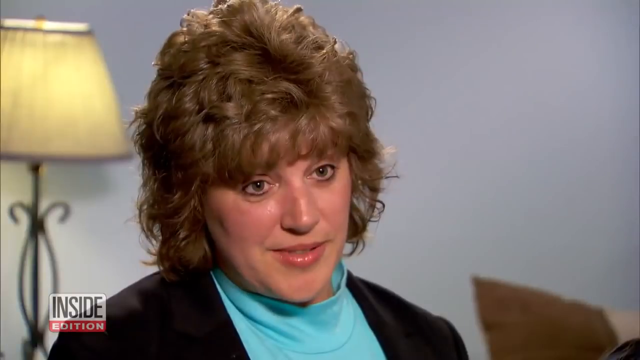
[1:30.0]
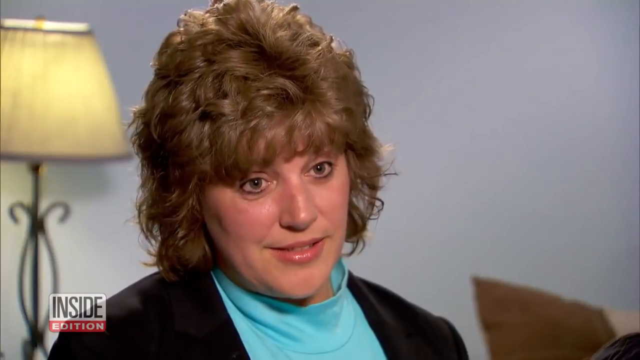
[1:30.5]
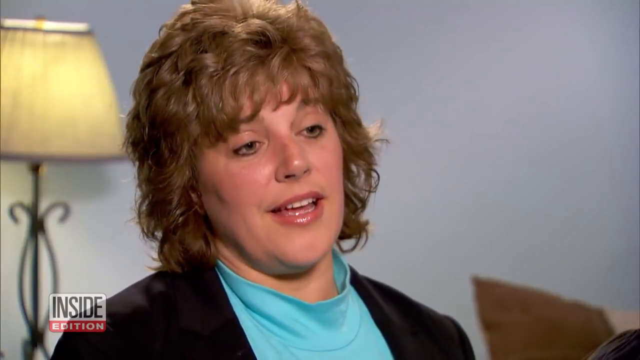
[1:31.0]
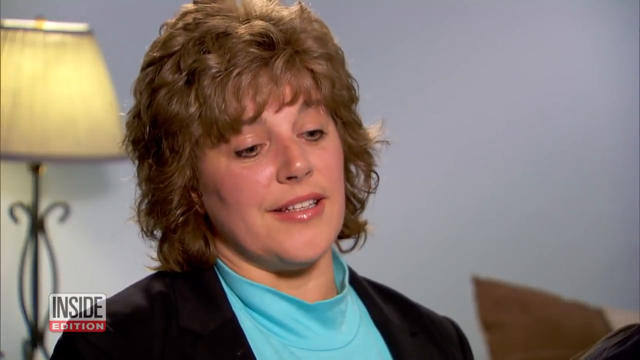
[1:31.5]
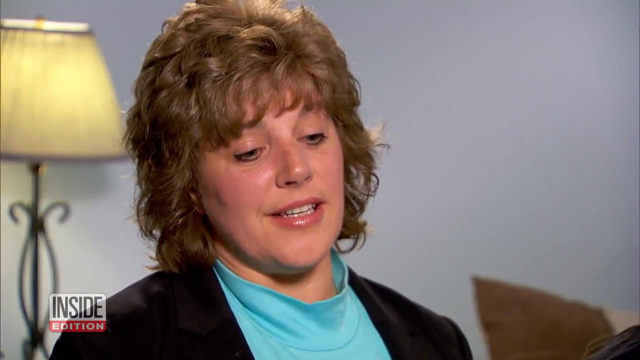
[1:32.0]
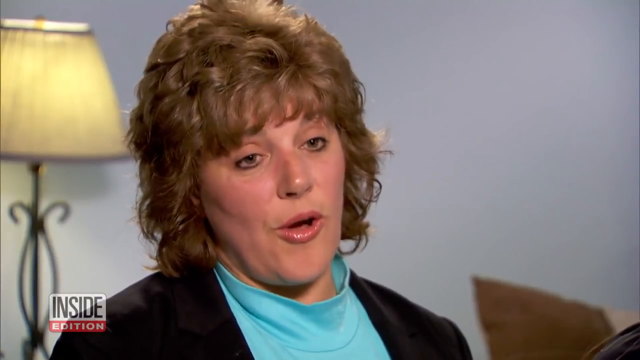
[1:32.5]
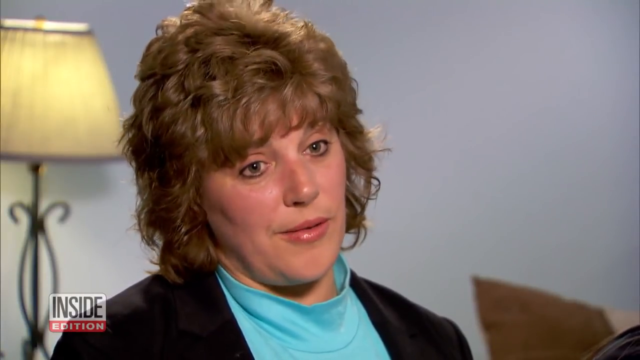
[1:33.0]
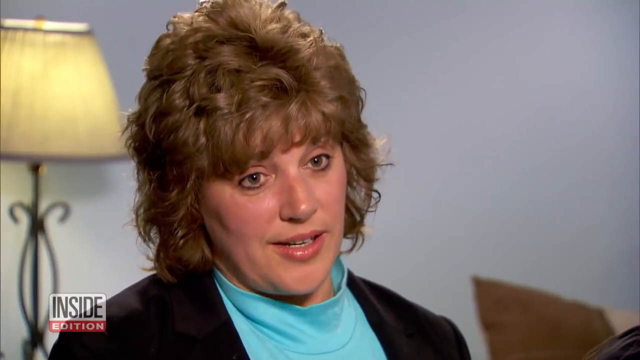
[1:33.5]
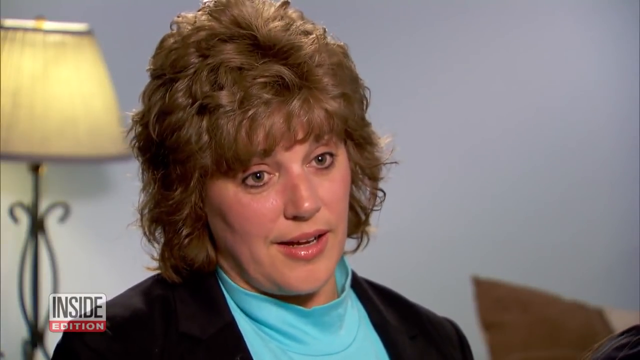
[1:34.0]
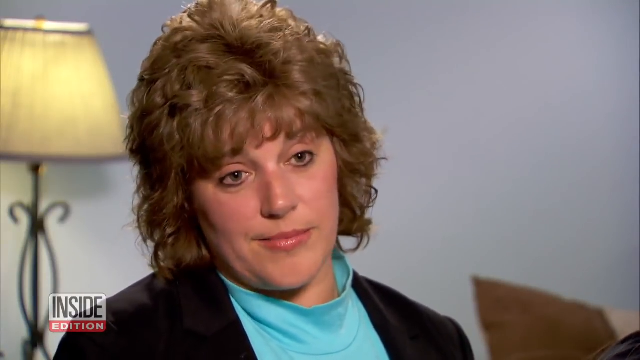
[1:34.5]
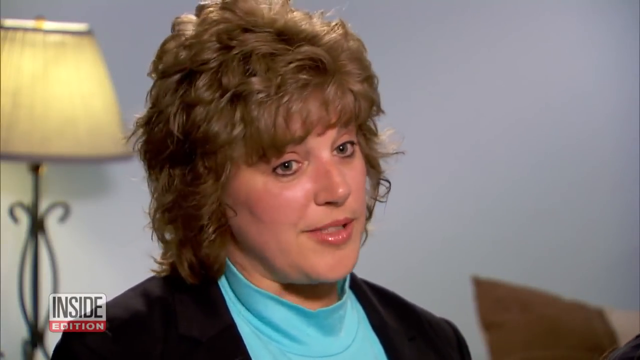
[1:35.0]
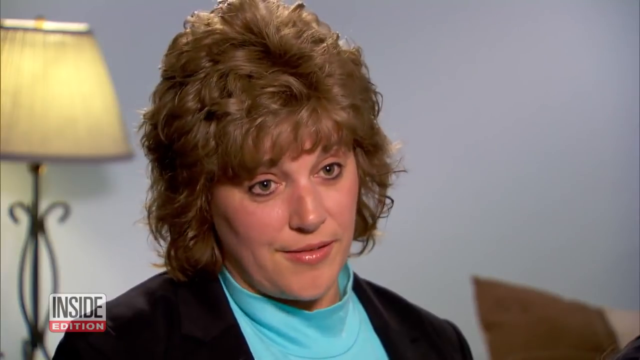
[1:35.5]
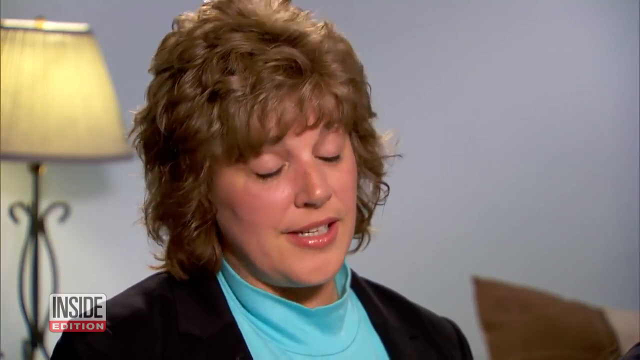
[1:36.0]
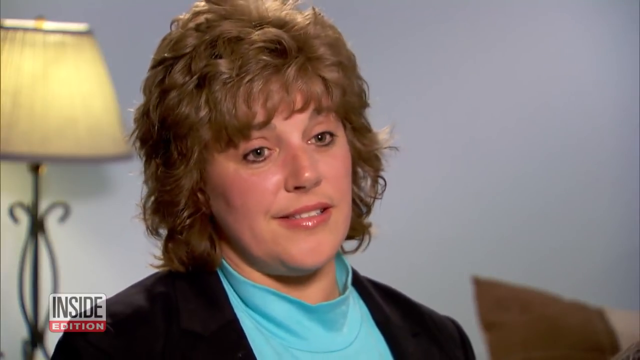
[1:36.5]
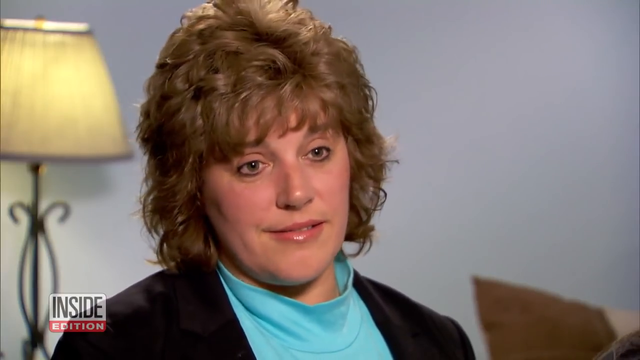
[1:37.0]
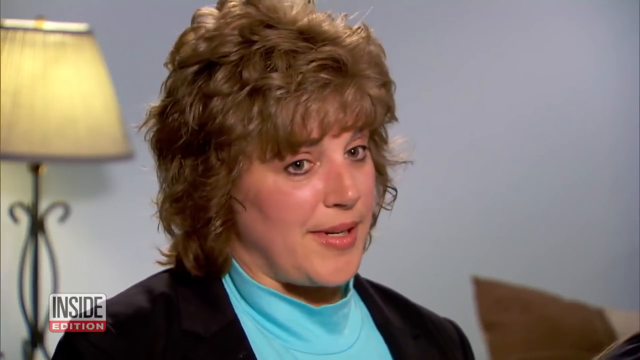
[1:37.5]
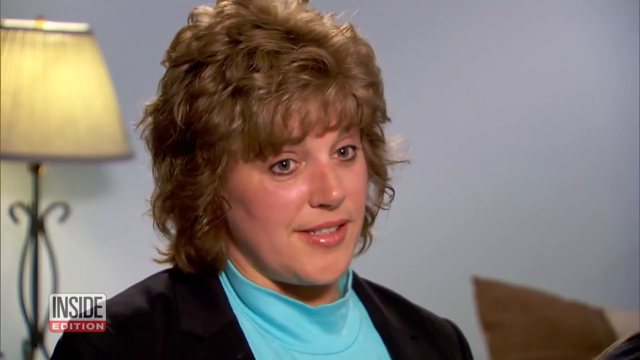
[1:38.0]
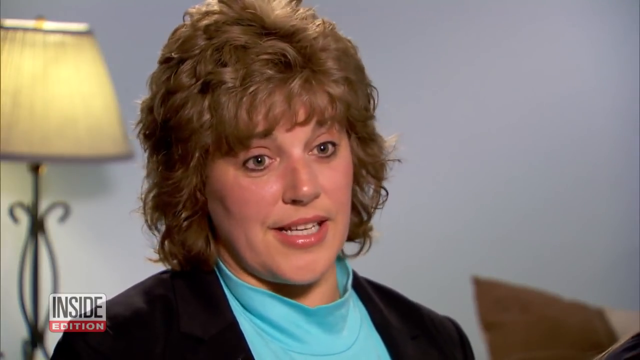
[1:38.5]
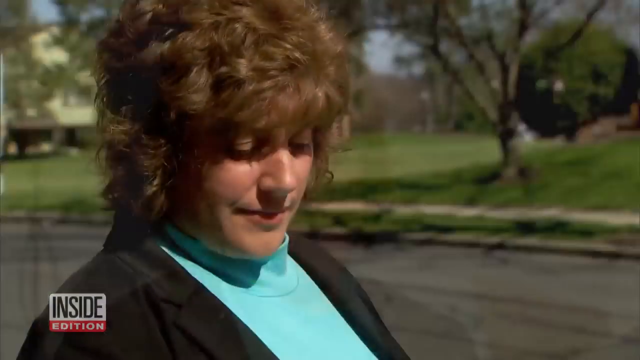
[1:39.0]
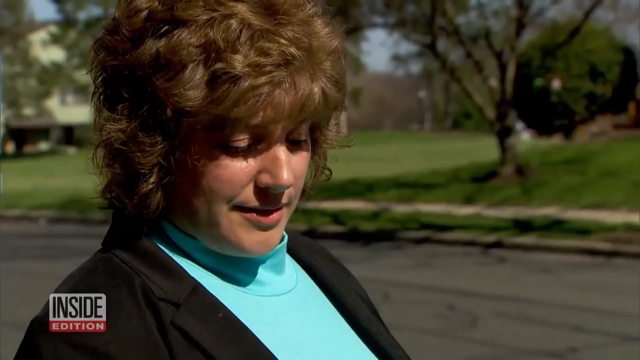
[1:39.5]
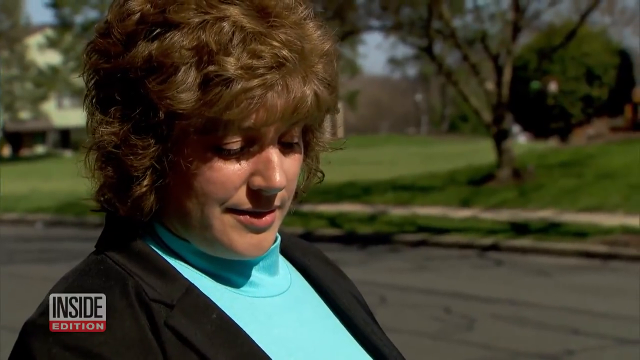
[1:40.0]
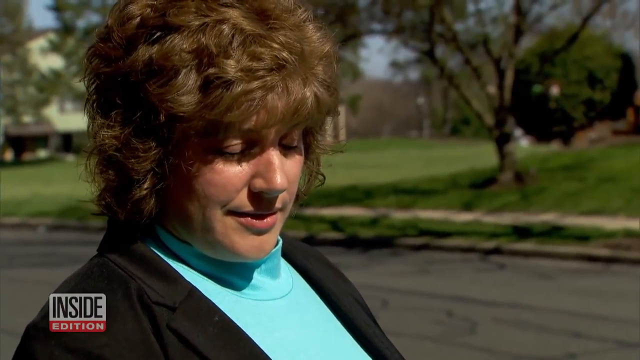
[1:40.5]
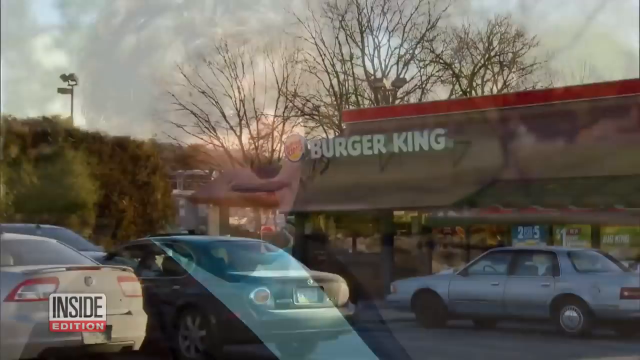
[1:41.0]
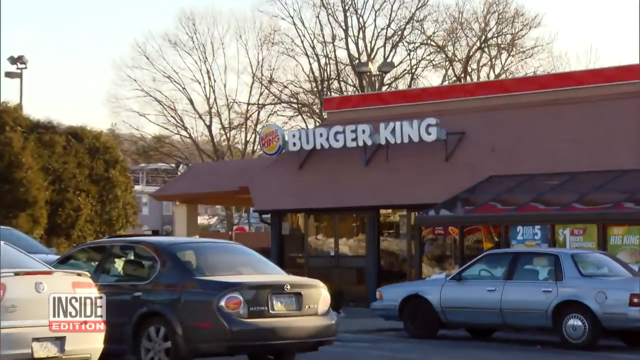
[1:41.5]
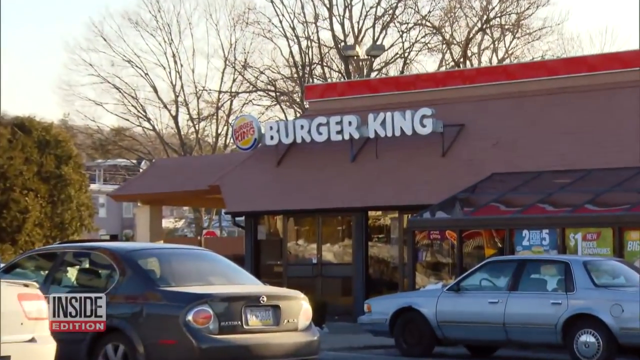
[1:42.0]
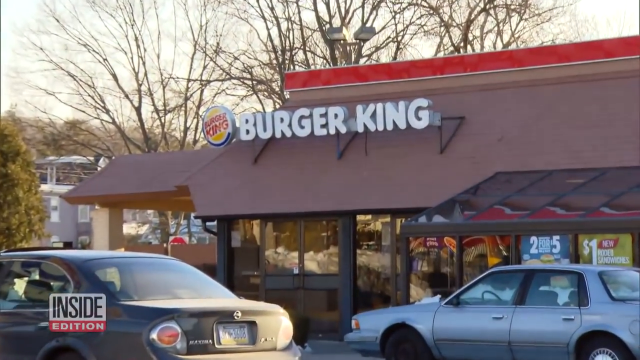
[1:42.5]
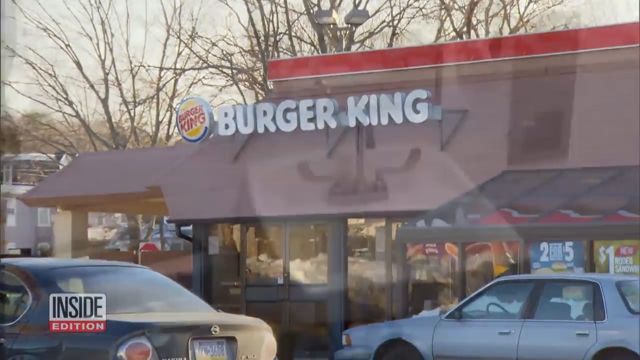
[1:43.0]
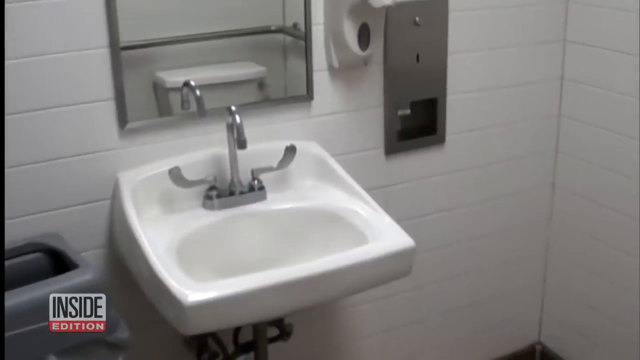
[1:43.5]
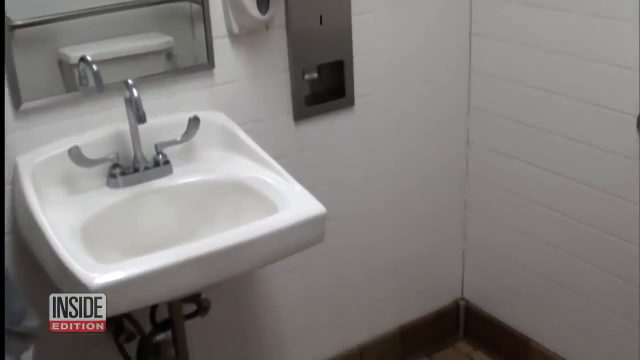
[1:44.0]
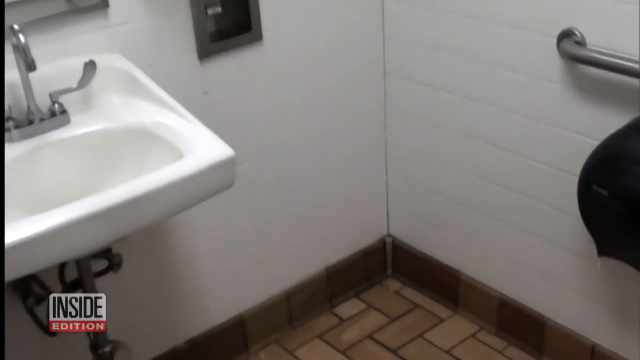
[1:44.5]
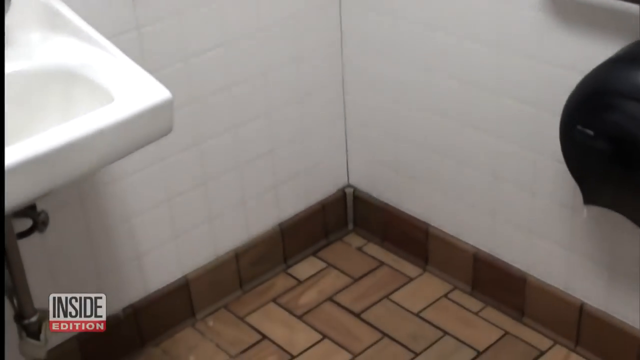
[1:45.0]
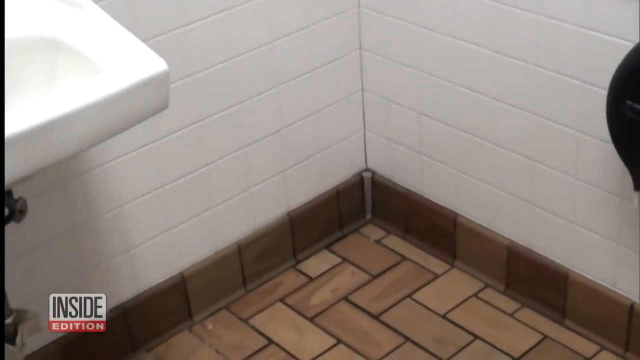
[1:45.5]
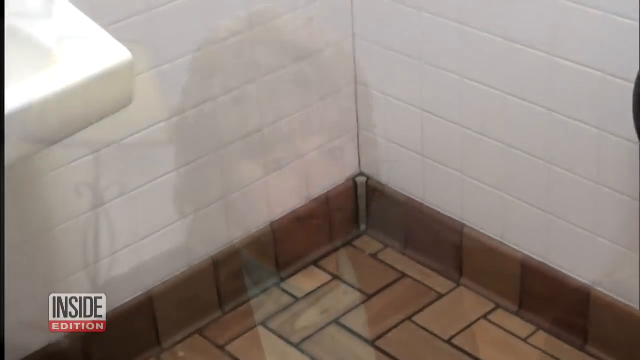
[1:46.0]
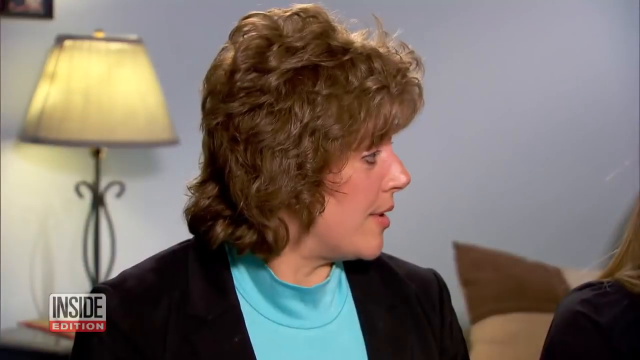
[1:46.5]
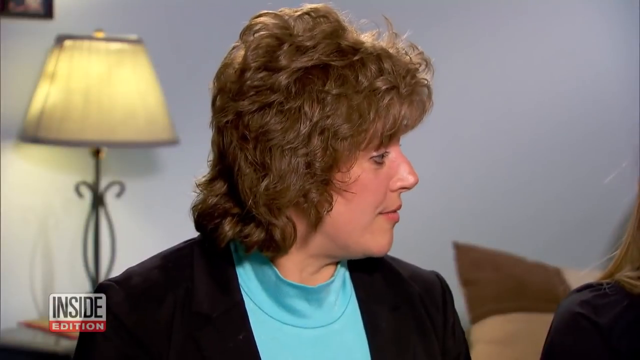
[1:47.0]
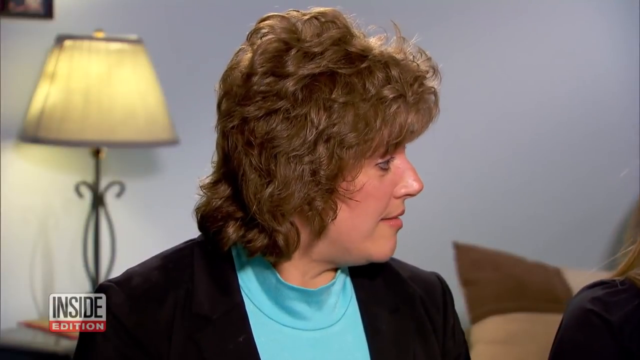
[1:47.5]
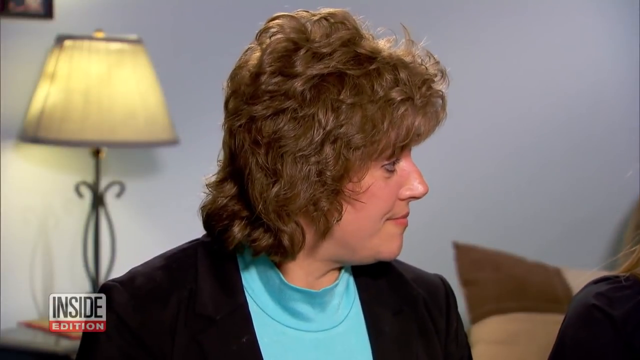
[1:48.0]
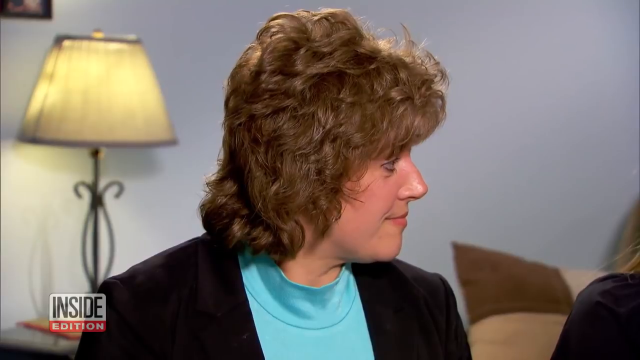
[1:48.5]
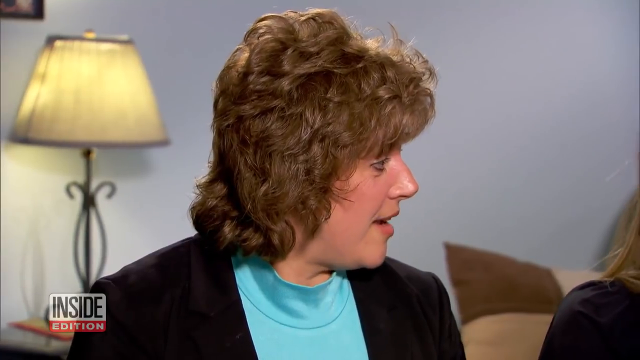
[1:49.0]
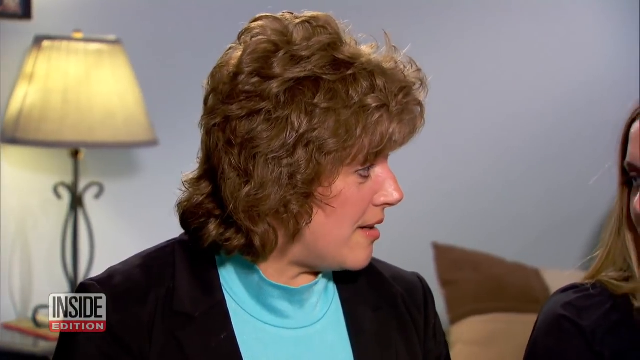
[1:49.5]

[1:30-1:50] The middle-aged woman, who has short, kind of shaggy, wavy hair, sits in a chair talking to a reporter, with a lamp on behind her. She talks quite a bit, presumably about leaving the baby in the bathroom. A Burger King is shown, followed by footage of the bathroom inside, where she likely left the baby when it was a few hours old. Back with the woman talking, the grown woman who was abandoned is next to her, to her left and on the right side of the screen. The two talk a little, and the abandoned woman speaks a little toward the camera before the middle-aged woman starts talking again, presumably about leaving the baby years ago, why she did it, and how things turned out. She looks happy and glad to be reunited.